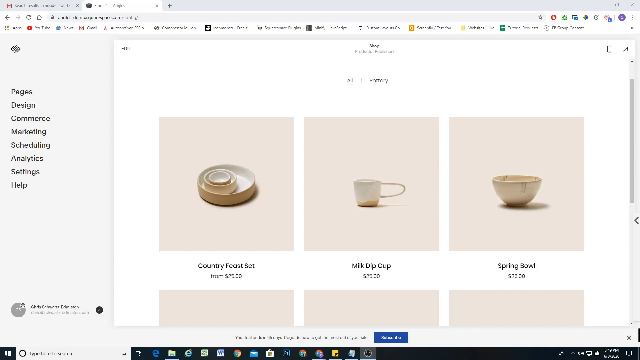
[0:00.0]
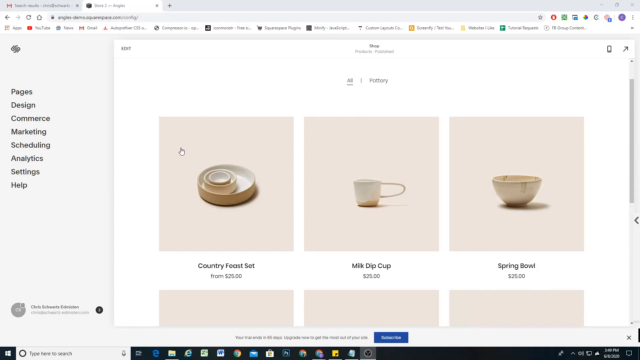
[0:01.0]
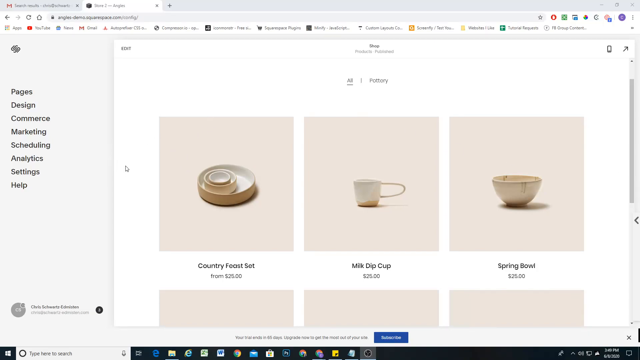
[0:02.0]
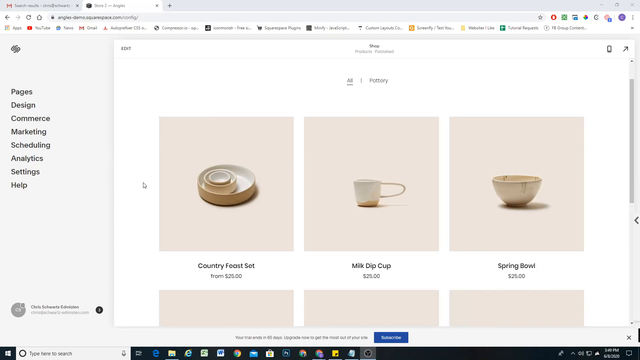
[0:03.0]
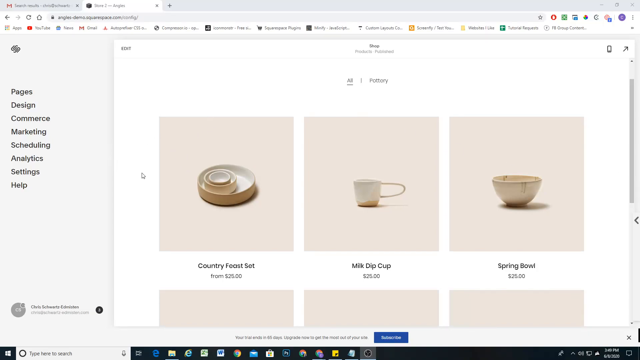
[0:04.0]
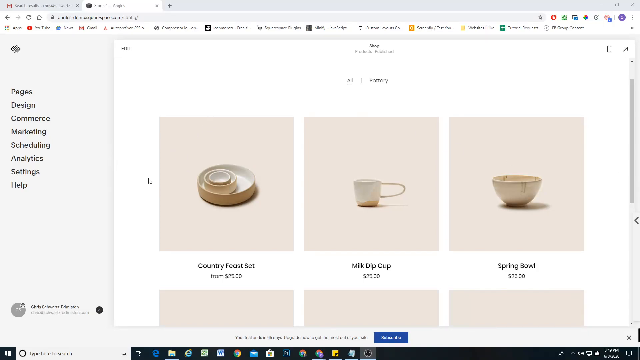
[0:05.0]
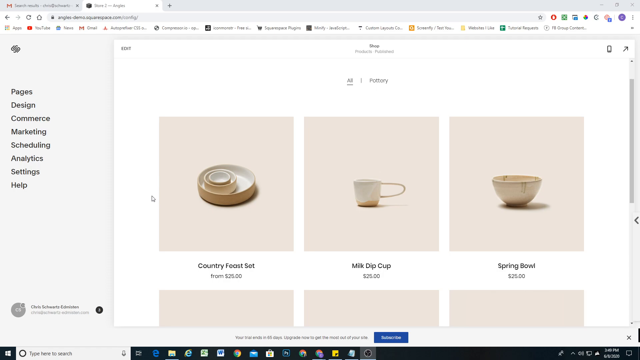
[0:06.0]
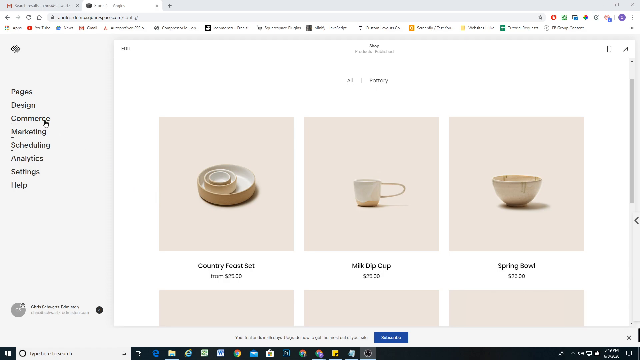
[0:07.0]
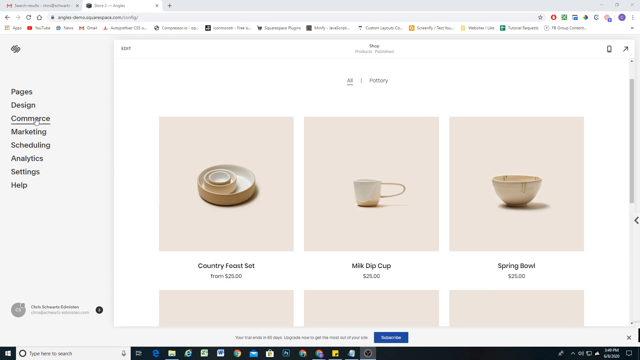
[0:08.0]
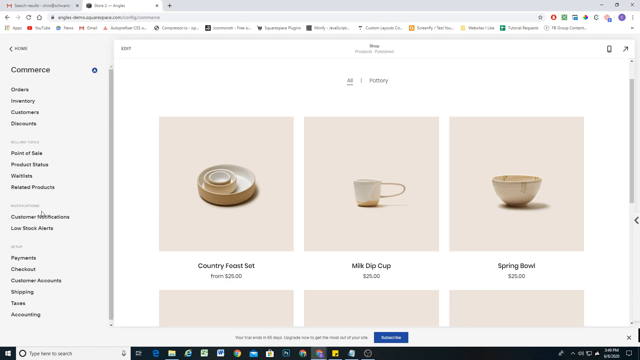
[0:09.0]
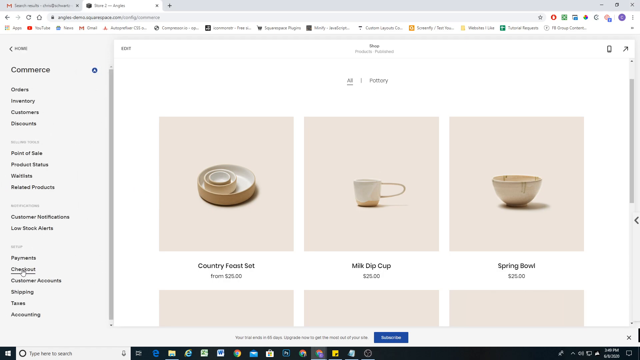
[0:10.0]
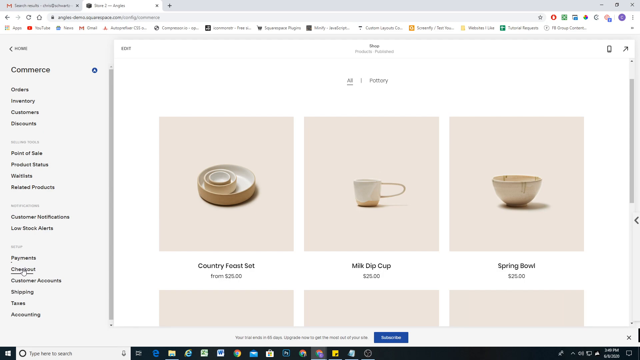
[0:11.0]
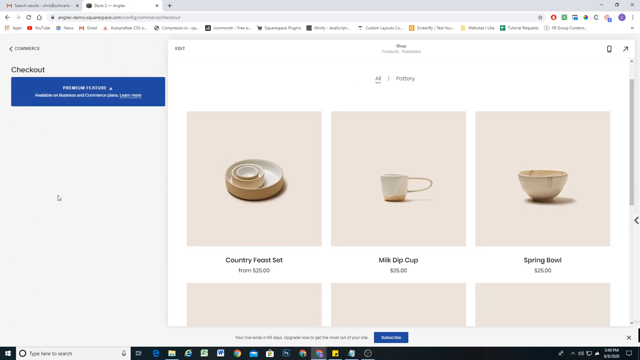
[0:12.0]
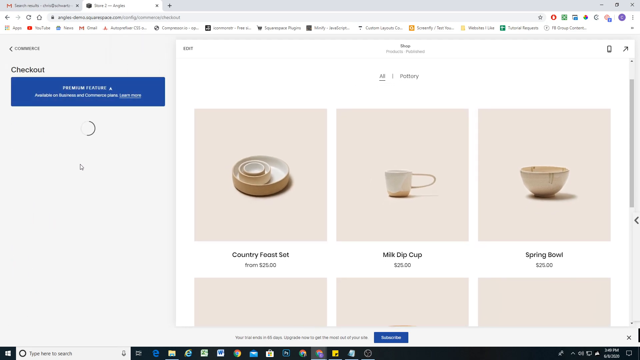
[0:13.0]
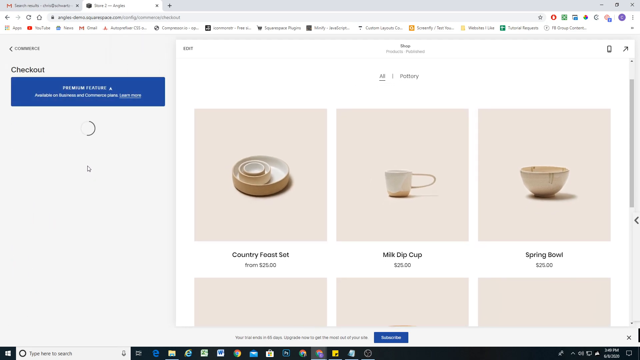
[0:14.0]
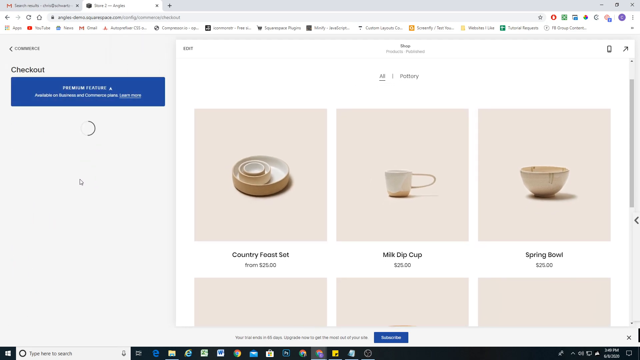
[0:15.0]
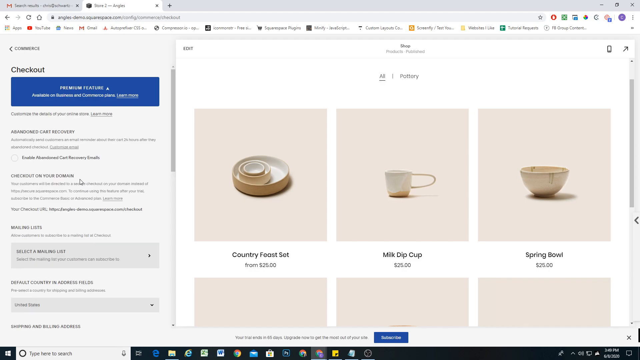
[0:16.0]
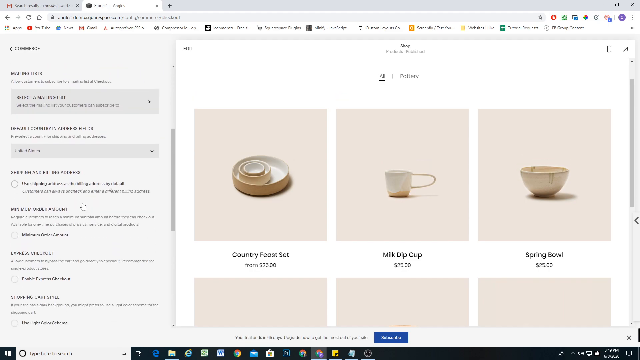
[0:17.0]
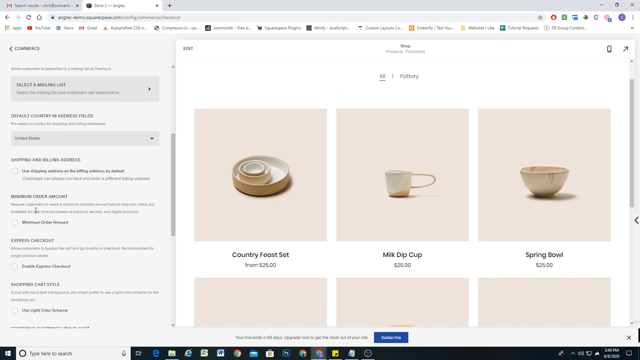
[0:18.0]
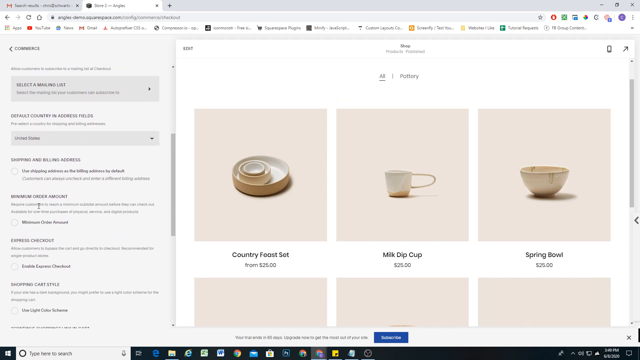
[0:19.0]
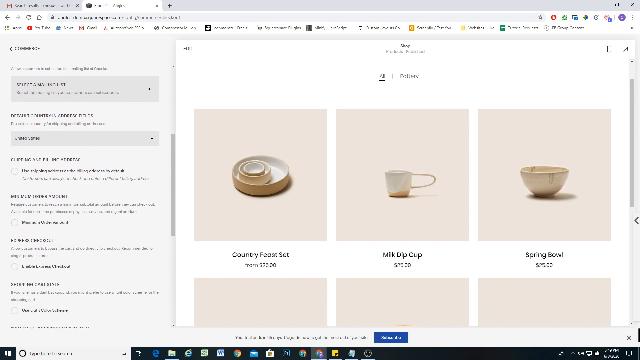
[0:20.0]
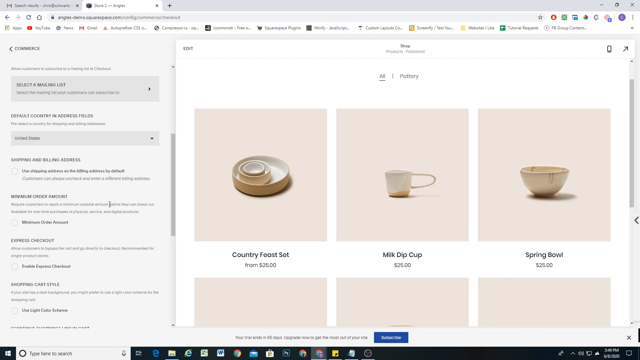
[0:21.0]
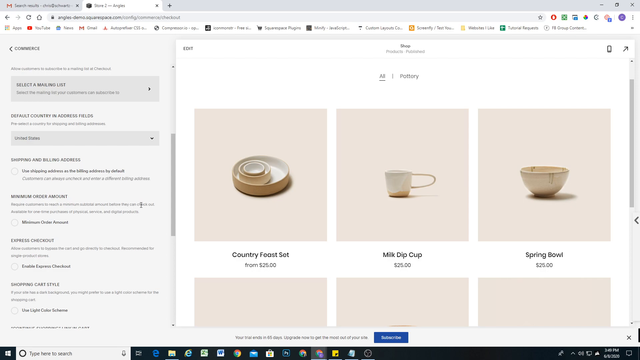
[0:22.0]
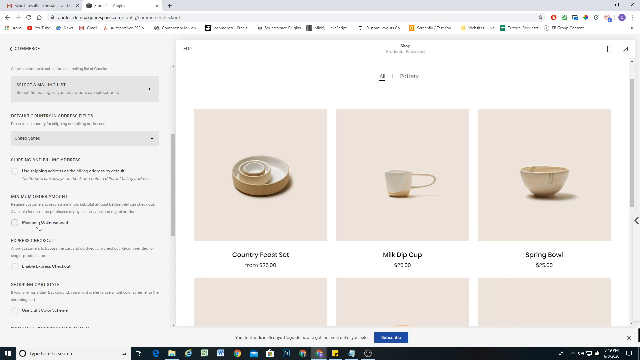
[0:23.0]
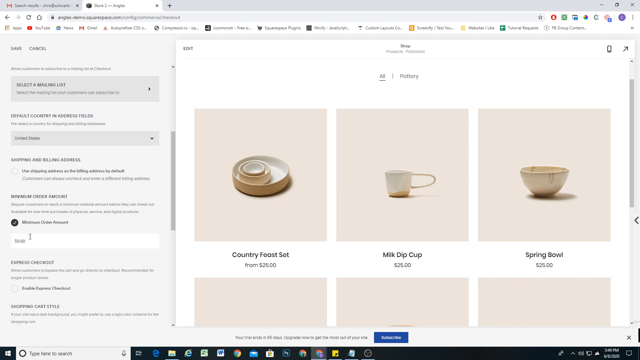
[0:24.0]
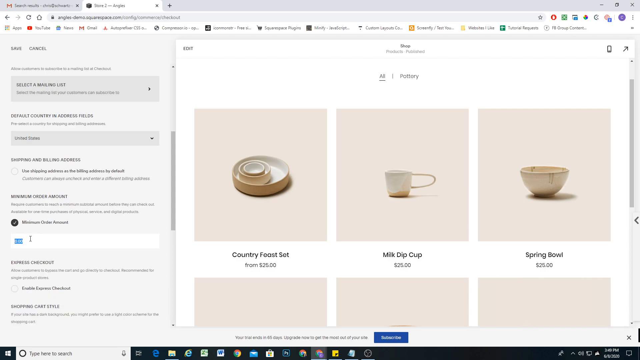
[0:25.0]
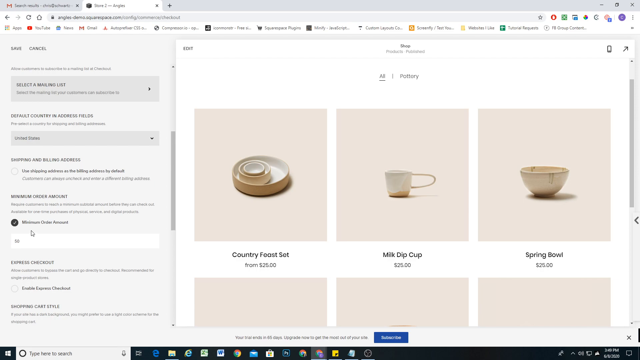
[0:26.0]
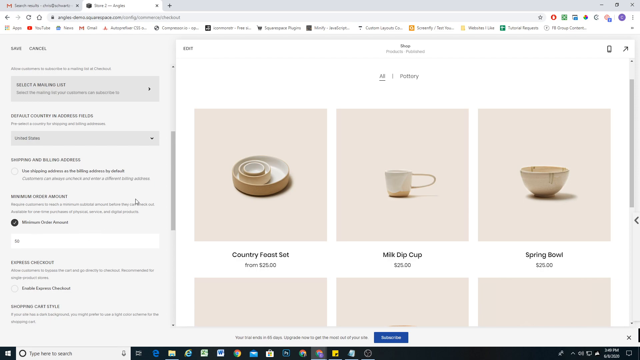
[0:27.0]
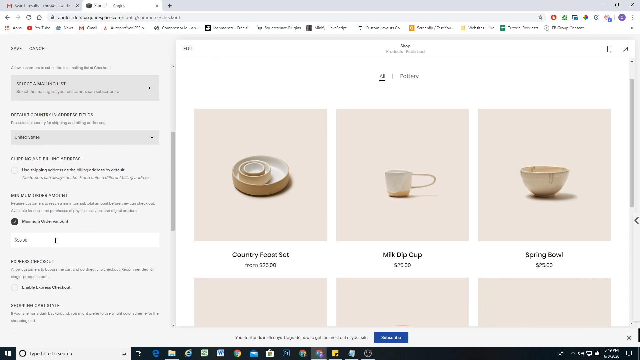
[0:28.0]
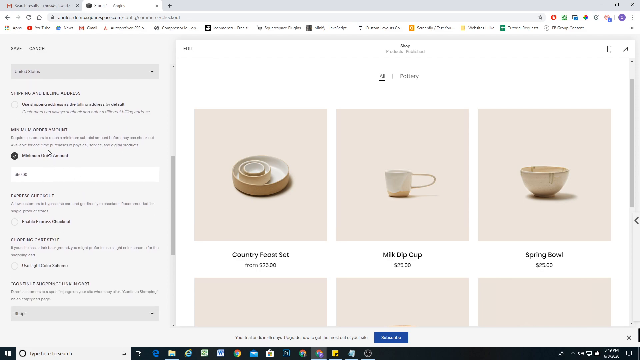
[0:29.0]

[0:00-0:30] The video opens on a white screen showing a web page inside a web browser. Numerous extensions are in the top right corner, and two tabs are on the upper left. On the left of the screen is a menu reading Pages, Design, Commerce, Marketing, Schedule, Analytics, Settings, Help. The middle of the page has a white background with three squares visible, each with a picture. One is labeled "Country Feast Set," the second "Milk Dip Cup," and the third "Spring Bowl," each priced at $25. The mouse cursor hovers around the leftmost square. It then clicks the menu item Commerce, hovers over Checkout, and clicks it. A blue box reading "premium feature" appears on the left side of the screen, with a spinning circle underneath it. A large body of text then appears over the circle, and the blue box disappears.